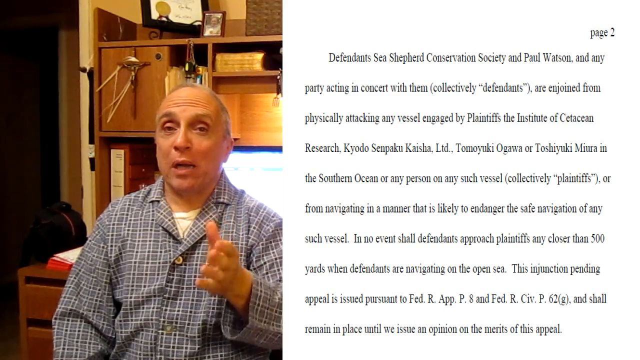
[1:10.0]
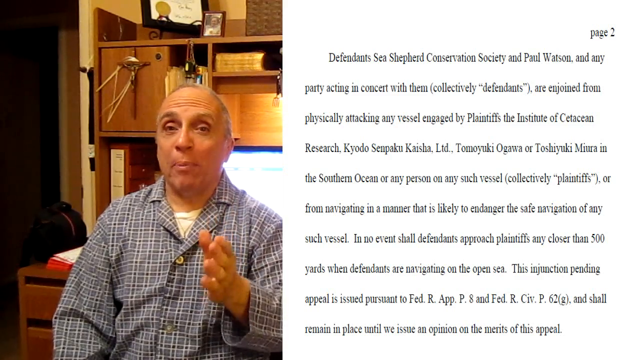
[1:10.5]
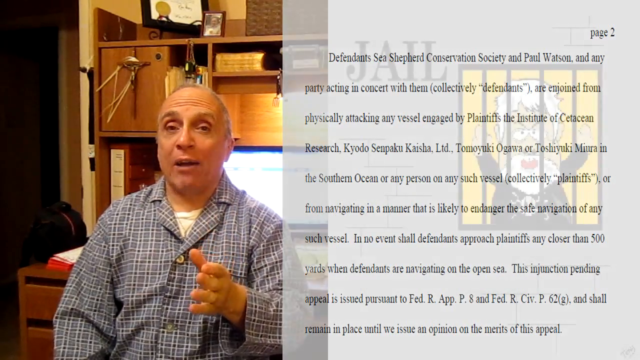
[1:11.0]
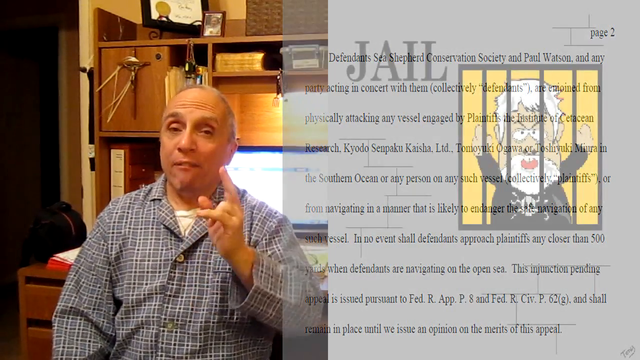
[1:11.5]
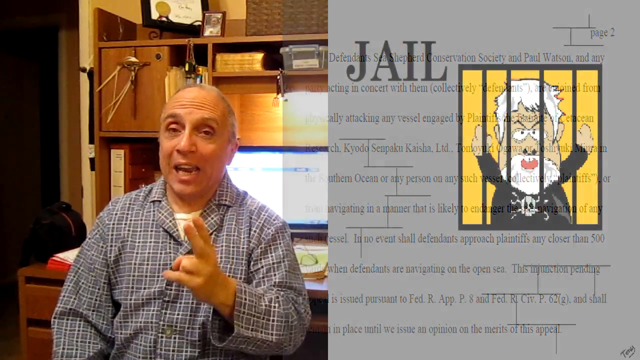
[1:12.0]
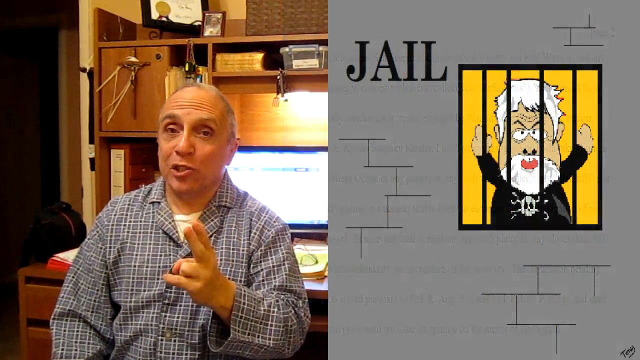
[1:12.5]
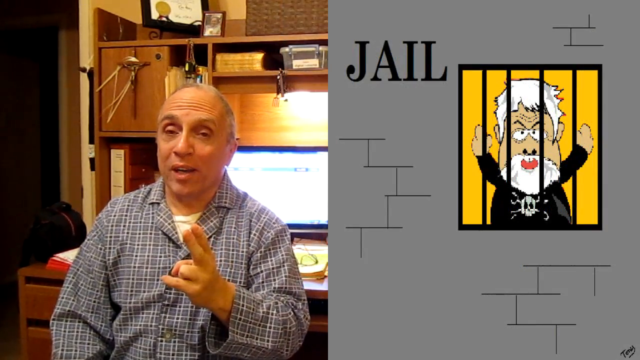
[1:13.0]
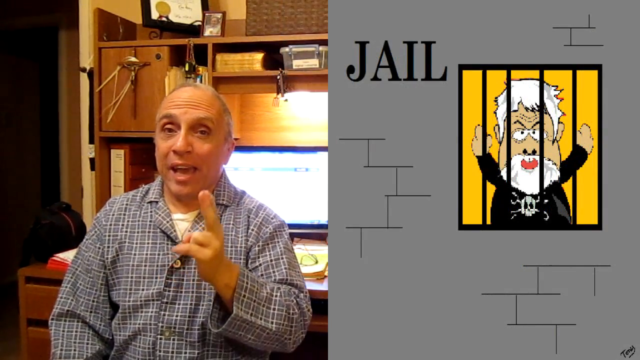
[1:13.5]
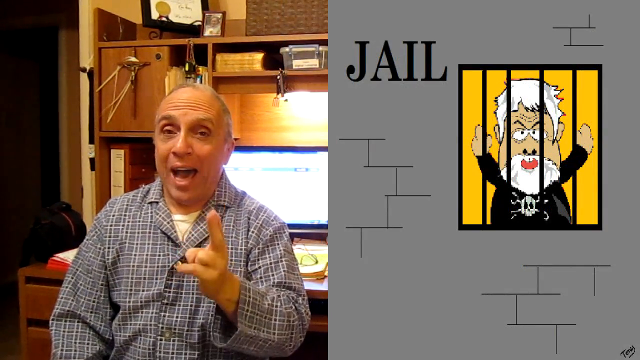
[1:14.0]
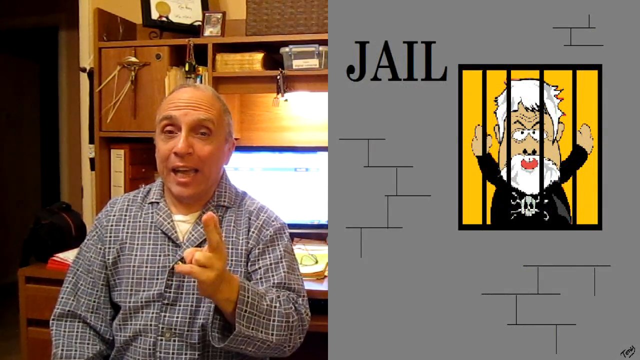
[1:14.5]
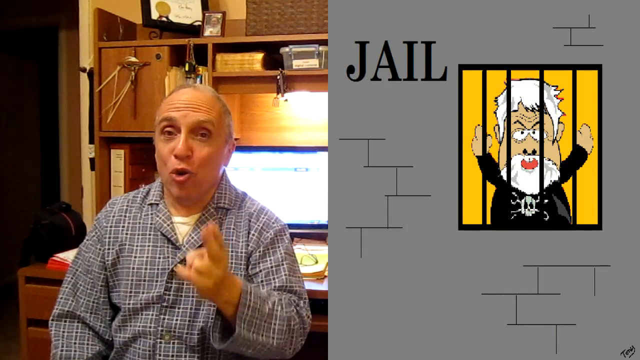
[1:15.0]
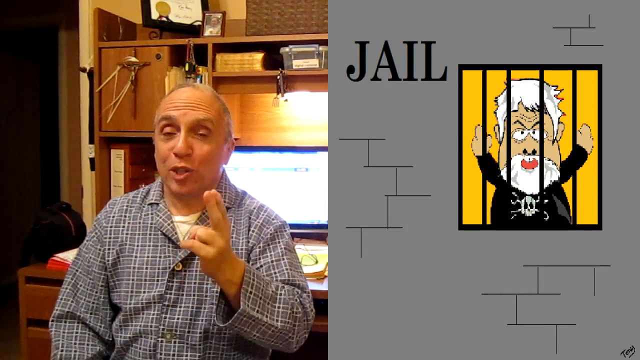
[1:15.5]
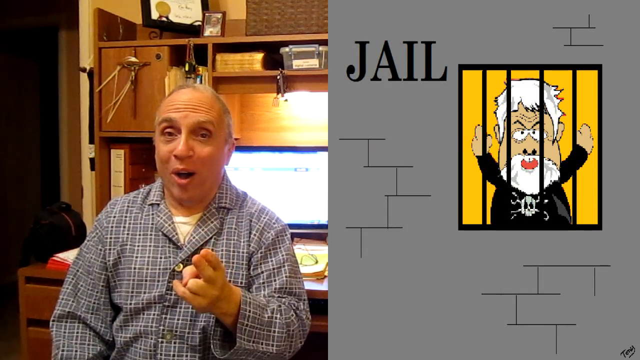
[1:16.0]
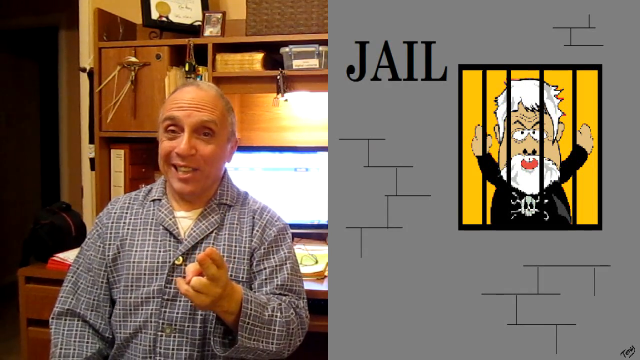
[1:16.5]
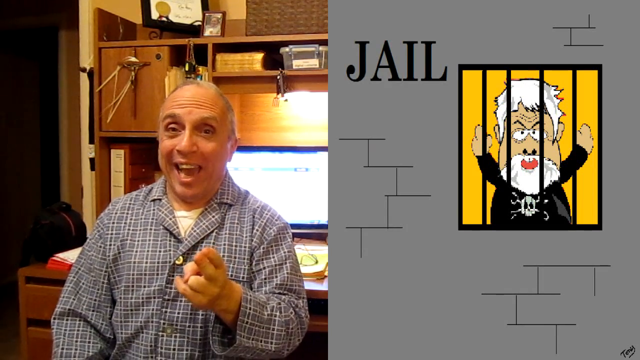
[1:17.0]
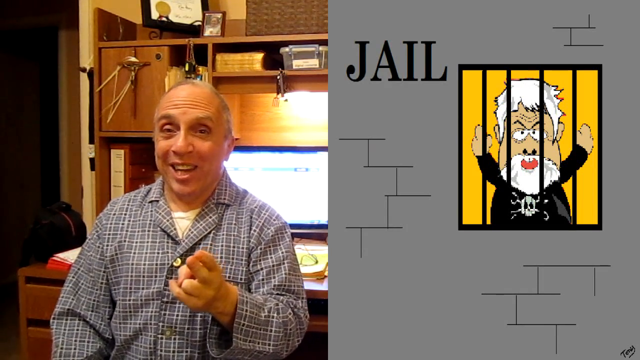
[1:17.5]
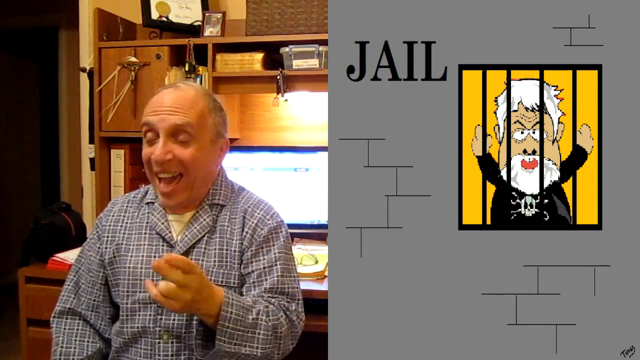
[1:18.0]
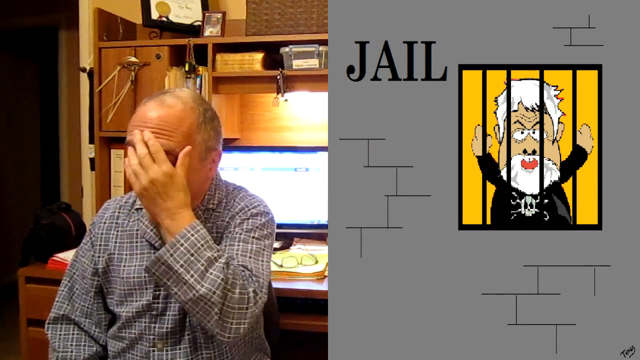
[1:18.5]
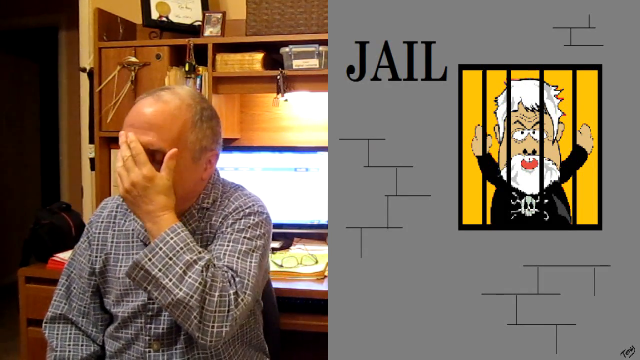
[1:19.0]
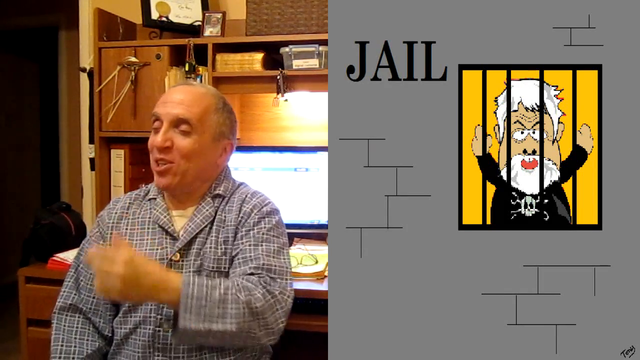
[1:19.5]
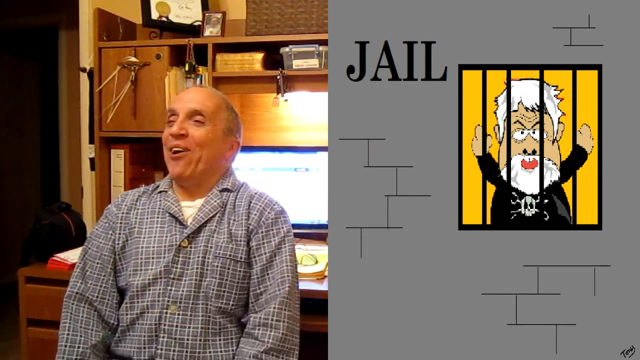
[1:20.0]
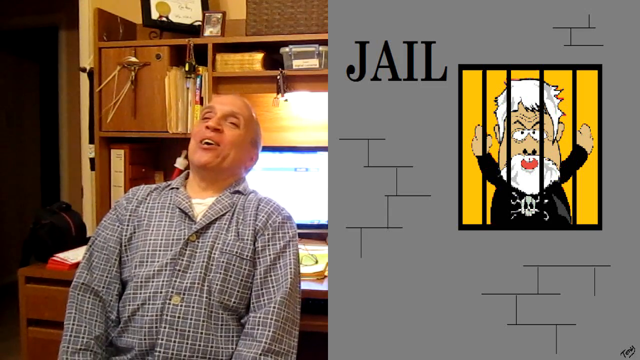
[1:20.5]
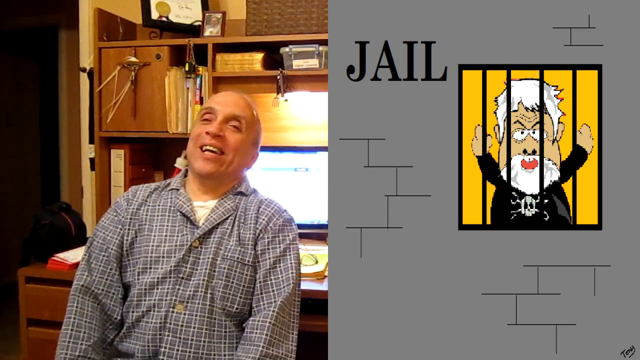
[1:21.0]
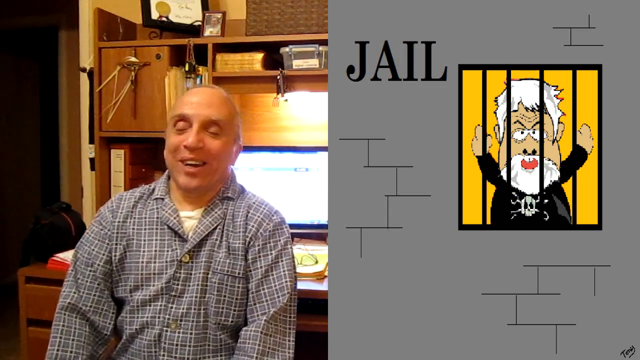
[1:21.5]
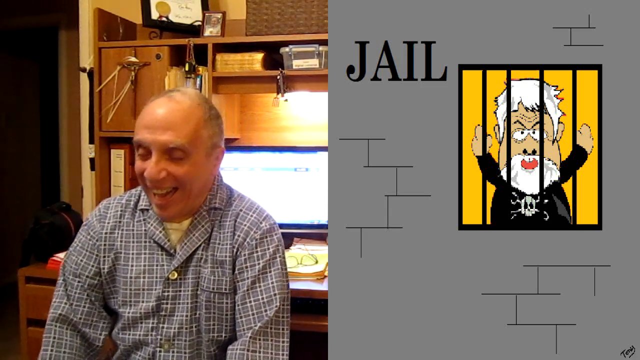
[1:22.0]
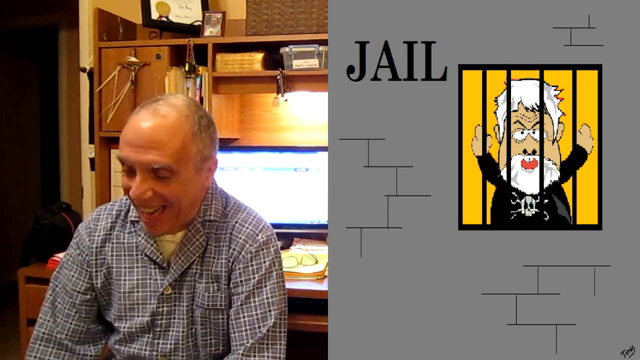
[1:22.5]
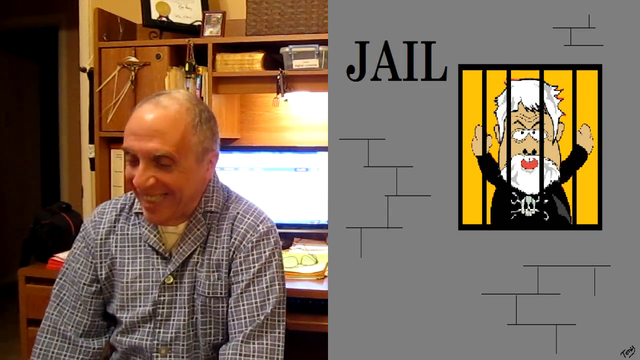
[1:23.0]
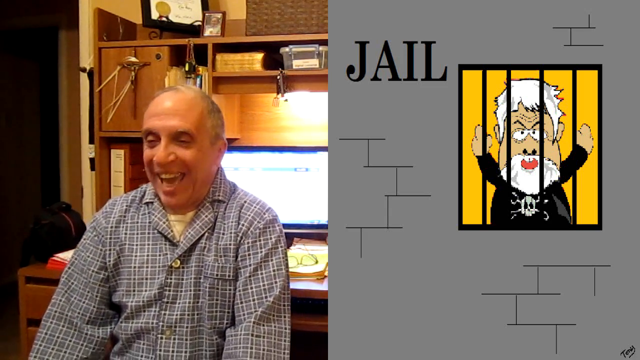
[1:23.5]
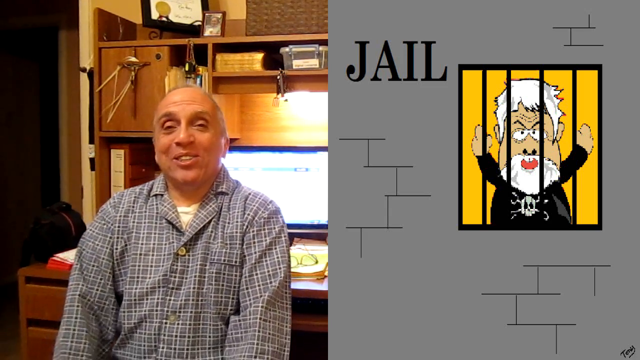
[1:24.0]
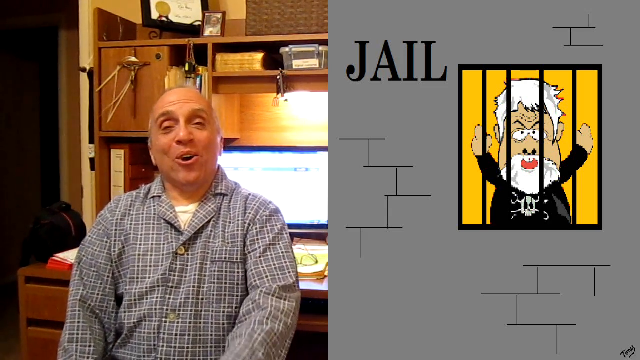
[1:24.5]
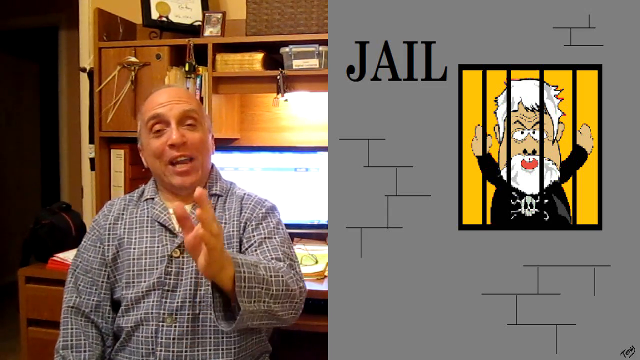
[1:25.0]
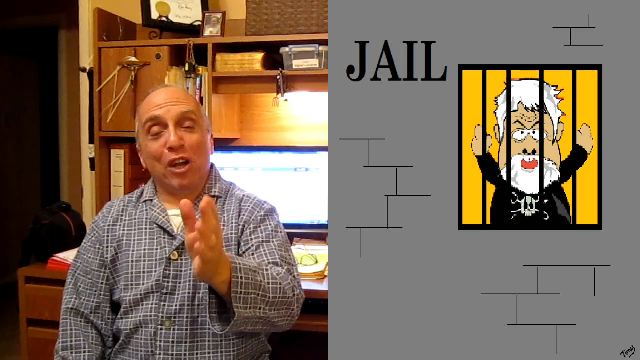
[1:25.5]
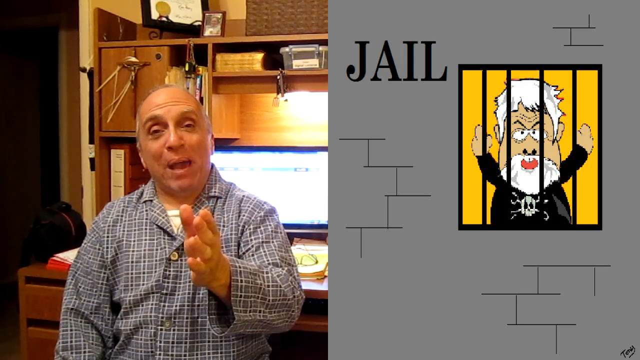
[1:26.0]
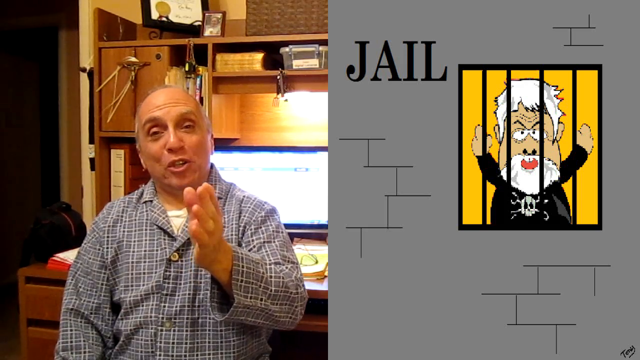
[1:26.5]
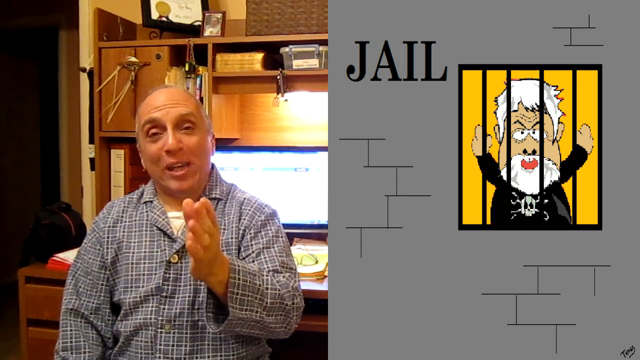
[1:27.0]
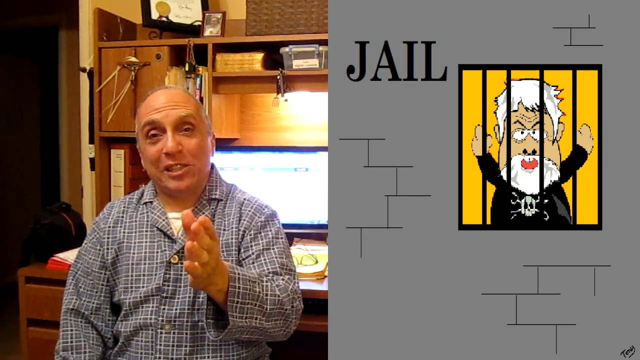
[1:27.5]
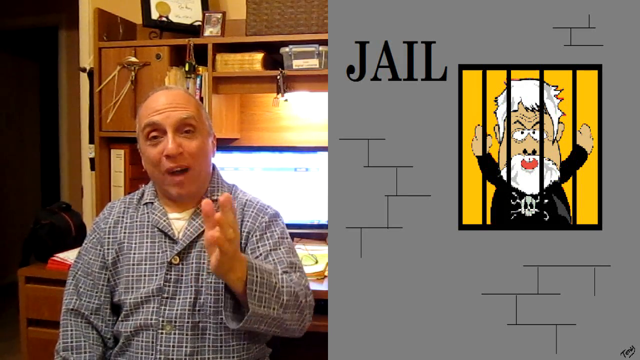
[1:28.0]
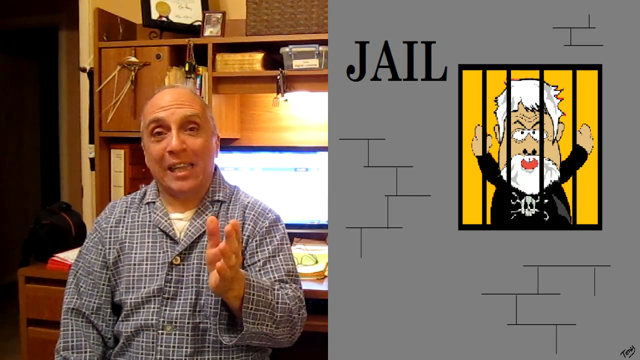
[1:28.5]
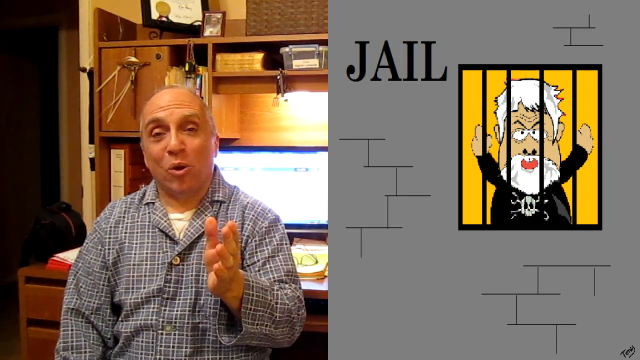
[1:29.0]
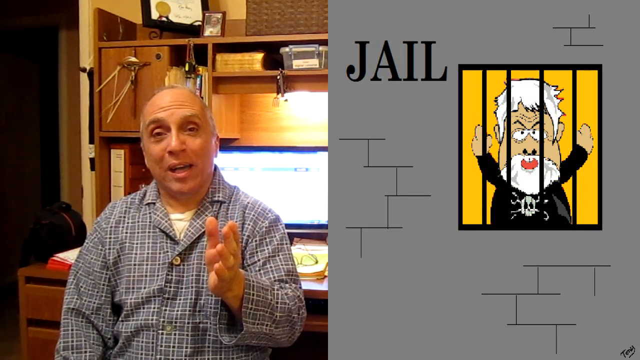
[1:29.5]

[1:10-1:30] The legal page transitions into an animated jail scene with bricks. In it, a man with white hair, kind of white skin, a gray beard and a black shirt with a gray skull and crossbones is locked behind bars with both hands up in the air, seemingly holding up his middle fingers. The drawing is a less detailed, almost South Park-like sketch of a man behind prison bars who looks kind of angry and is flipping someone off. The bald man, probably 50 to 60, is still present in the same shirt as before.